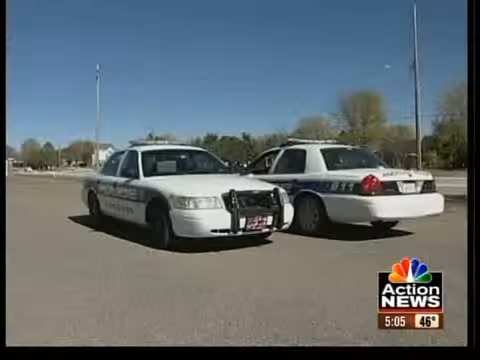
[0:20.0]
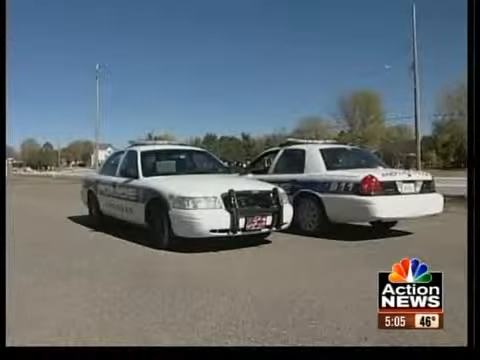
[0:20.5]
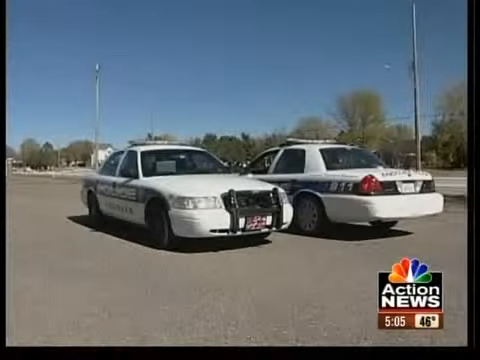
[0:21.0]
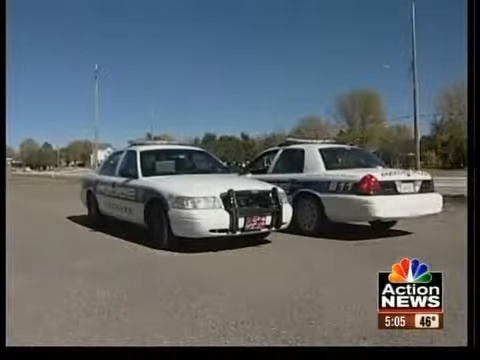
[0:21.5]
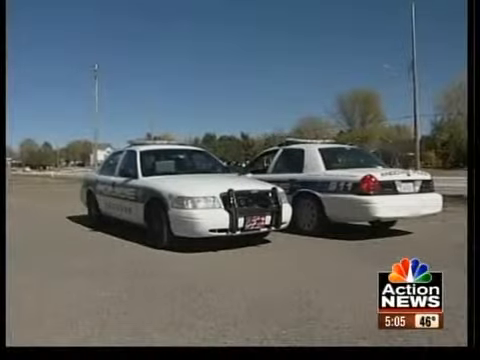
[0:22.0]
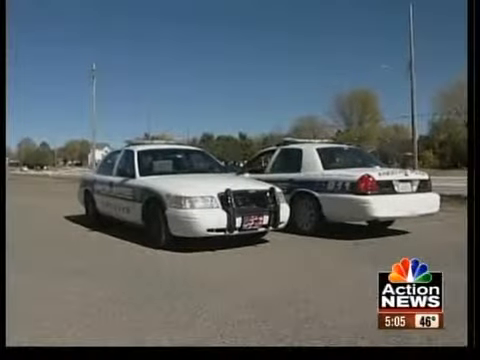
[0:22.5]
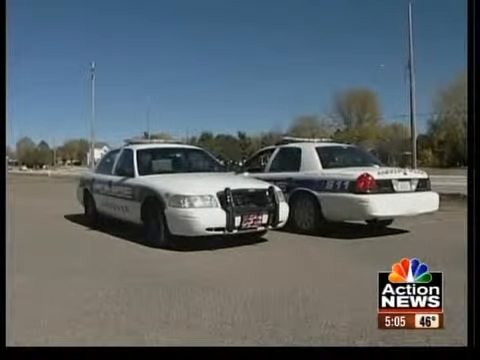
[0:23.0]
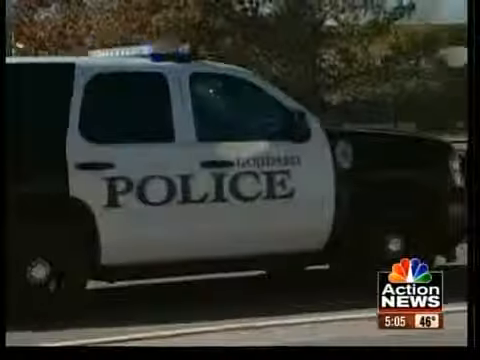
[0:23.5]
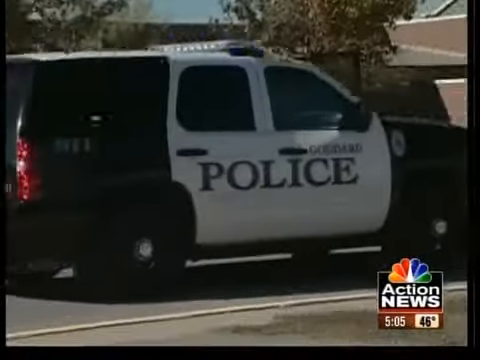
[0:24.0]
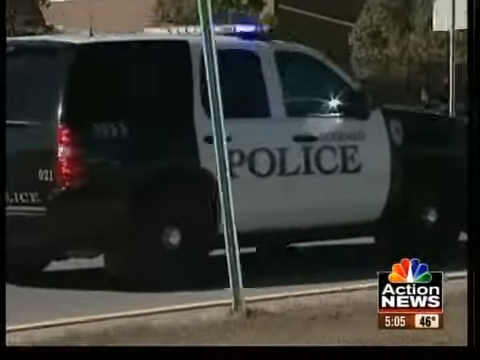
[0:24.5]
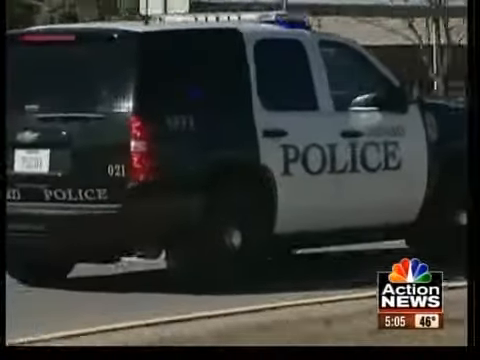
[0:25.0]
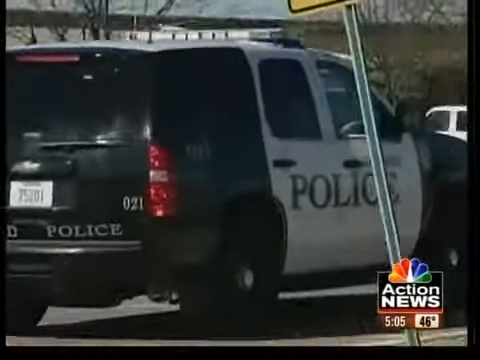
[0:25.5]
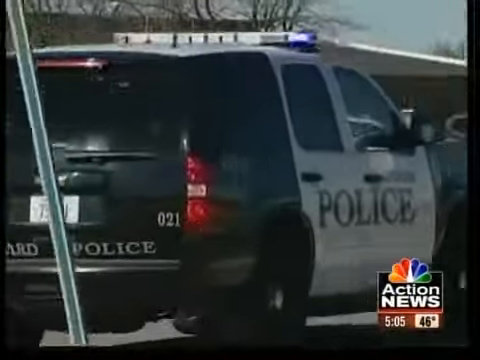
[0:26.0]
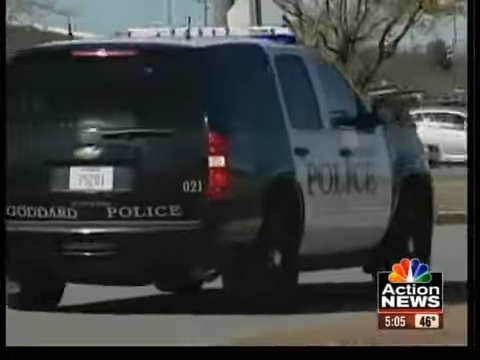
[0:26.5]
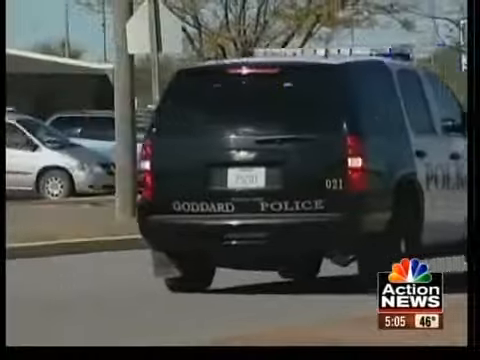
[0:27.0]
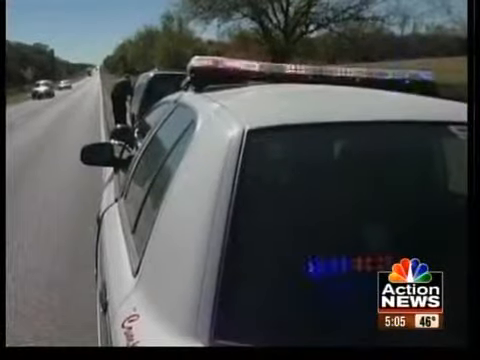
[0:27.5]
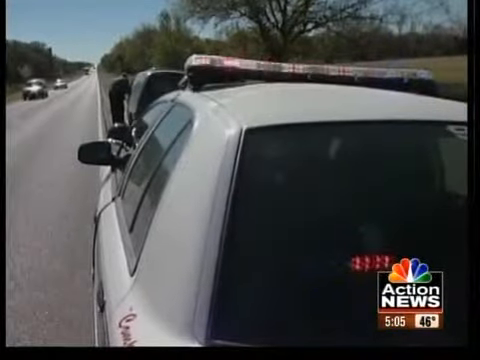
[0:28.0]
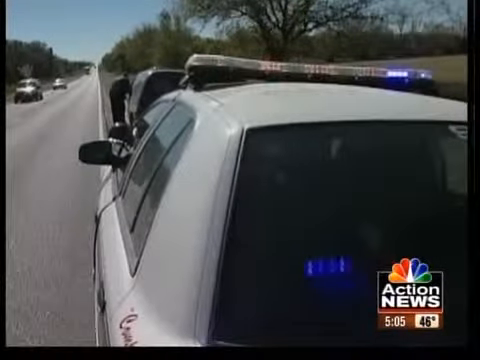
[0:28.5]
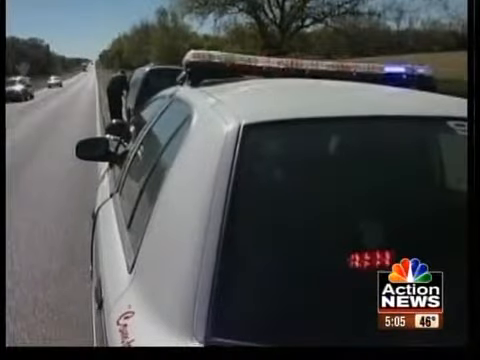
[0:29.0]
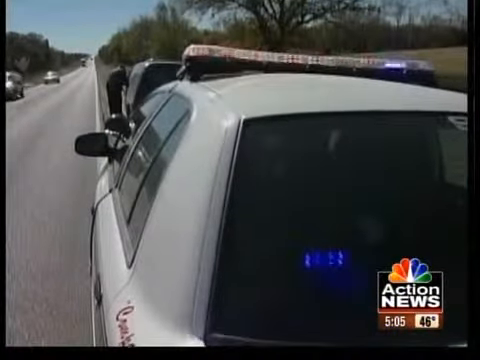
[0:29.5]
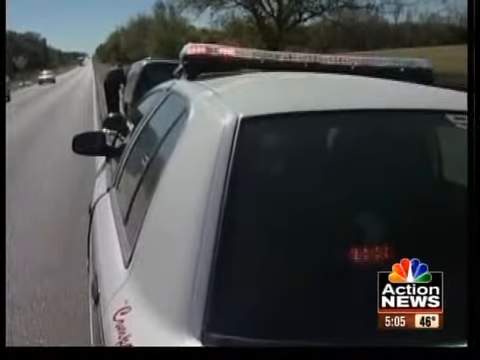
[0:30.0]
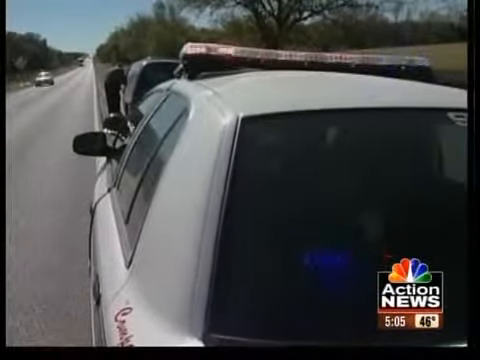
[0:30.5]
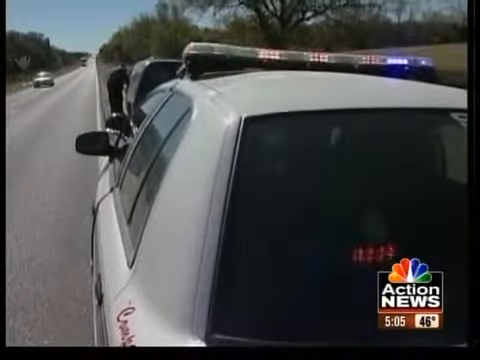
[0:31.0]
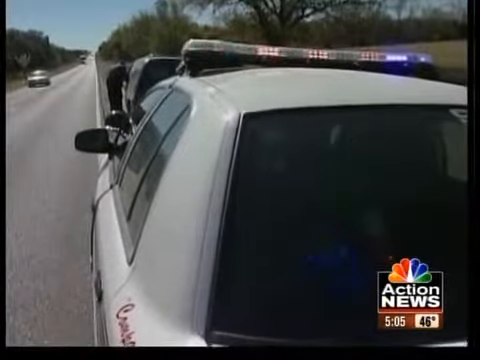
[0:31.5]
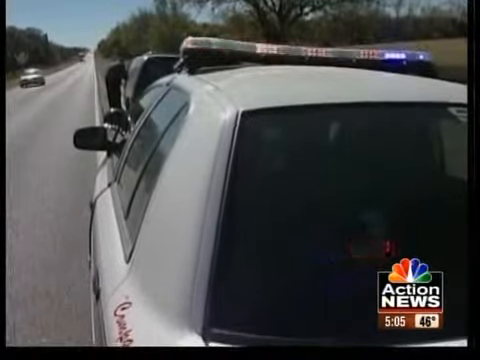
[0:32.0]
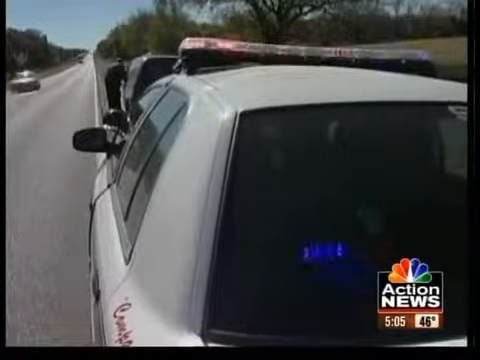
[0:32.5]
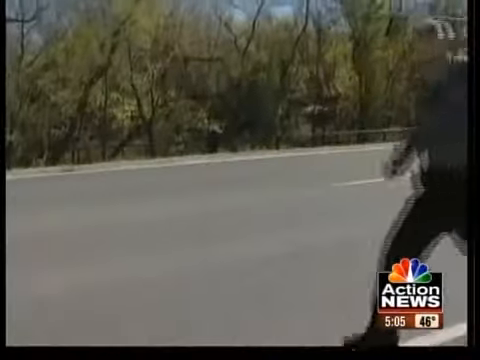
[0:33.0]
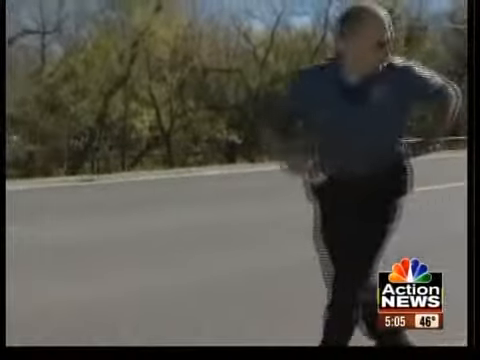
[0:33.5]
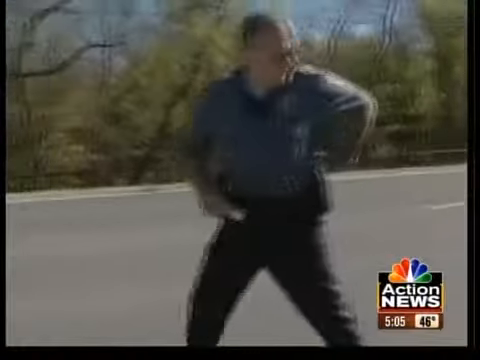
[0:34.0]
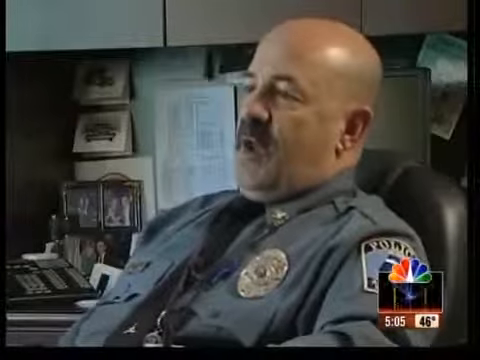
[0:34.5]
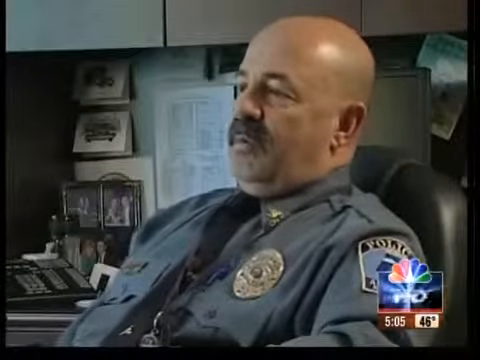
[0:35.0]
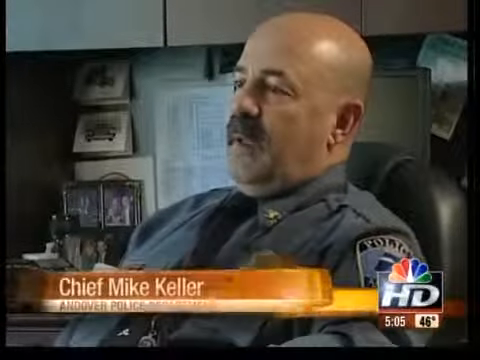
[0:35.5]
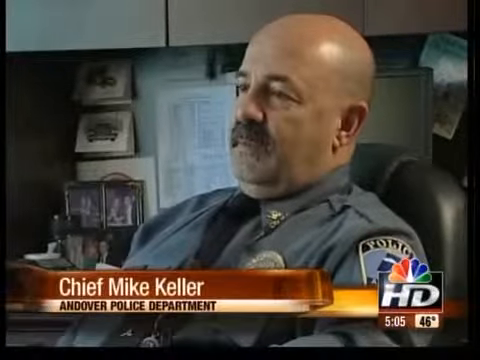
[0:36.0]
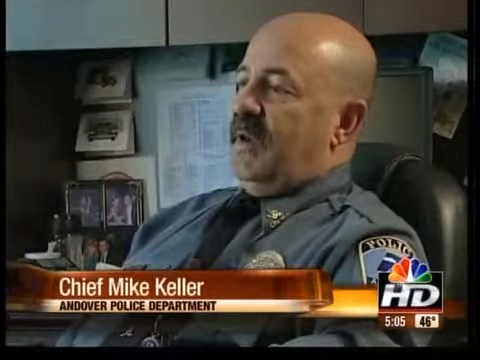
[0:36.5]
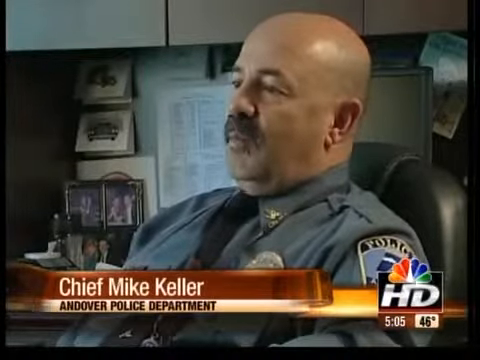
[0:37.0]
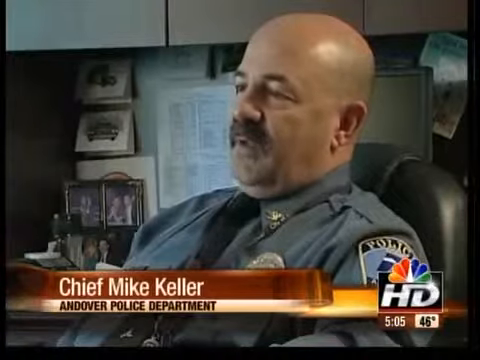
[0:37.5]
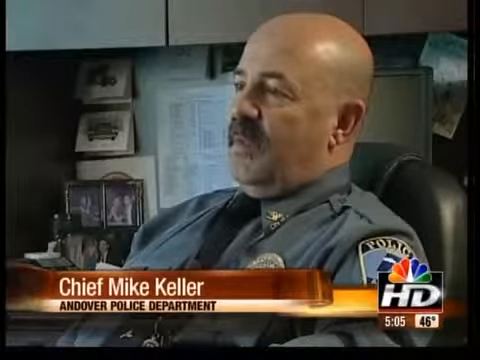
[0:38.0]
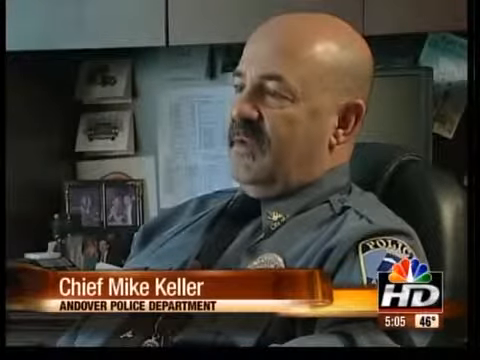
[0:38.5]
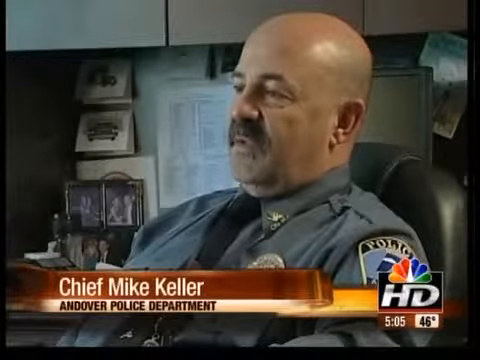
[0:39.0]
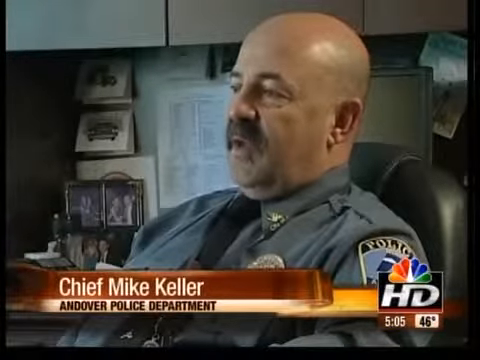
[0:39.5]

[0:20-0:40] Two police cars are next to each other, going forward in opposite directions, in the middle of a city. Portions of the city are visible, like a neighborhood, along with large street lights or electrical lines. Another shot shows a vehicle or SUV that says police; the vehicle is black, not white. It seems to be heading quickly in a direction of the city, and a portion of its license plate reads "5201". The video then cuts back to the police officer pulled over on the side of the highway. The police car's red and blue flashers are blinking. The officer looks back as he walks away from the vehicle he has pulled over. There is sweat at the top of his shirt. Multiple cards and paperwork are visible. A banner at the bottom of the screen shows the name Mike Keller and "Andover Police Department".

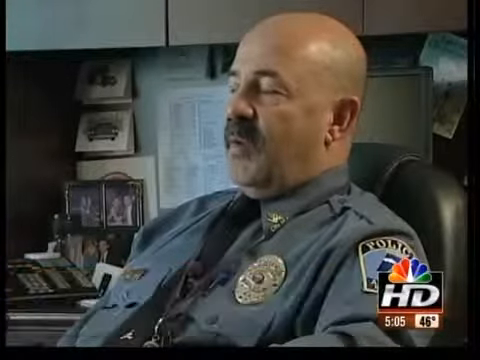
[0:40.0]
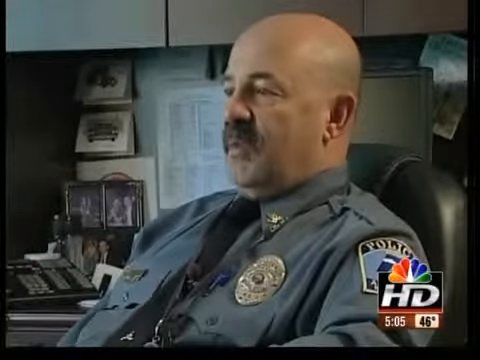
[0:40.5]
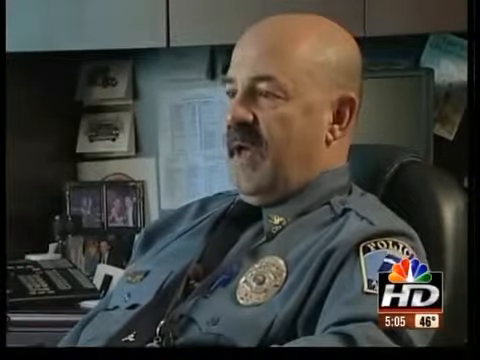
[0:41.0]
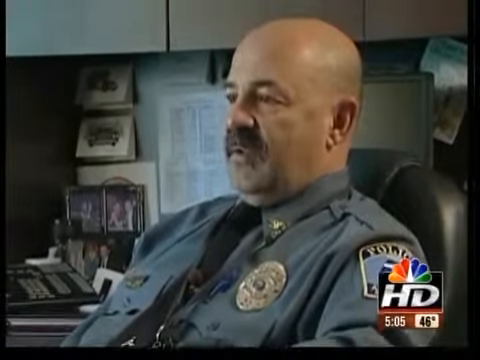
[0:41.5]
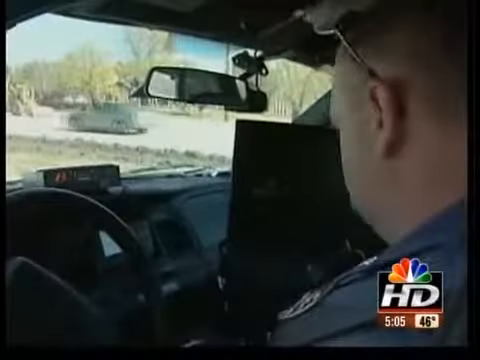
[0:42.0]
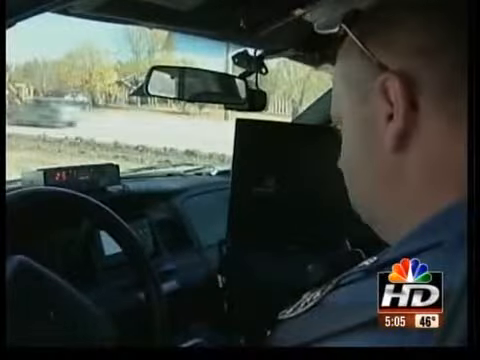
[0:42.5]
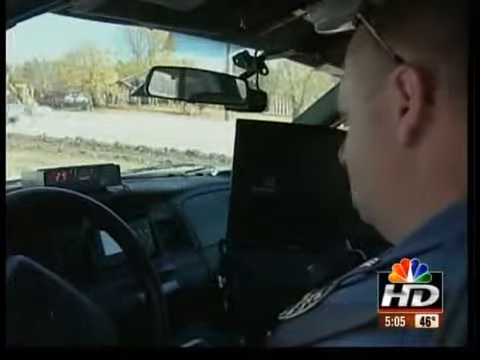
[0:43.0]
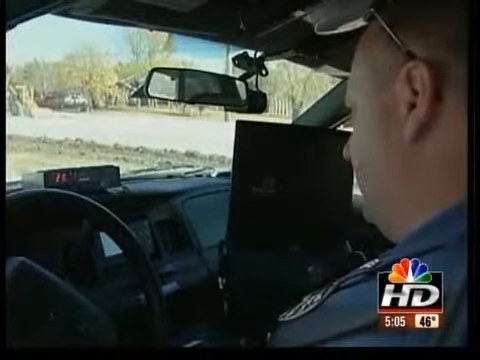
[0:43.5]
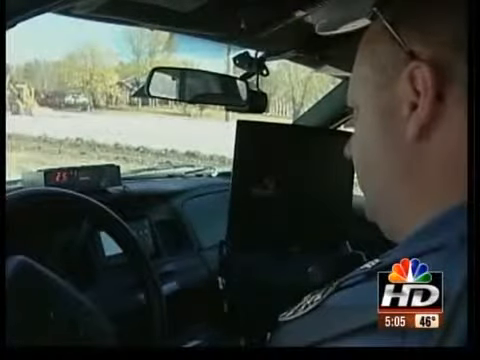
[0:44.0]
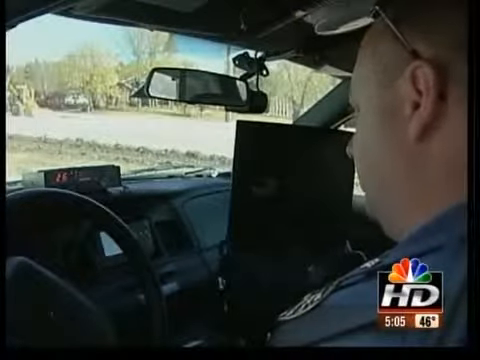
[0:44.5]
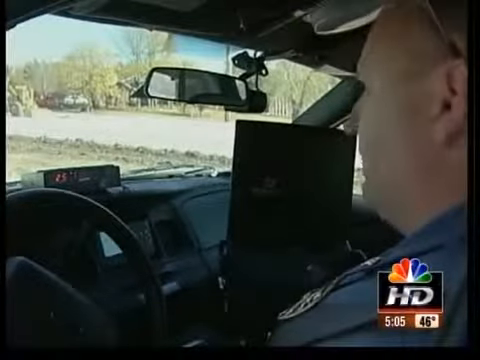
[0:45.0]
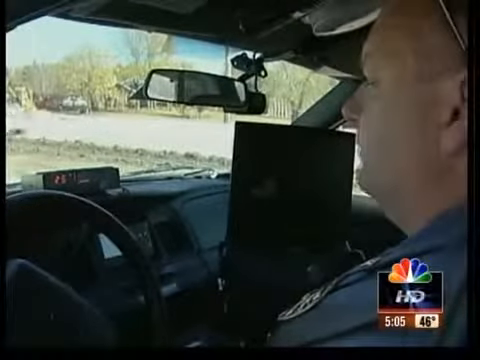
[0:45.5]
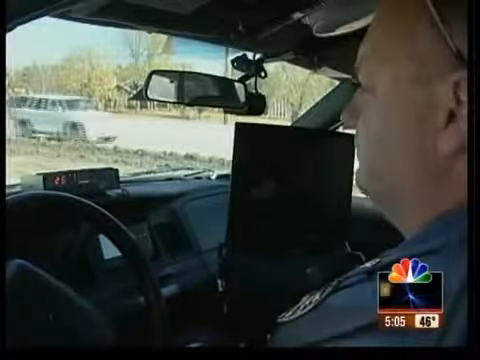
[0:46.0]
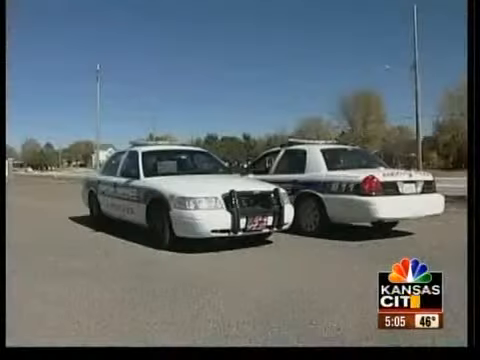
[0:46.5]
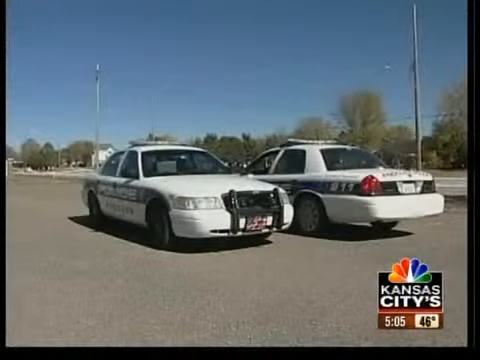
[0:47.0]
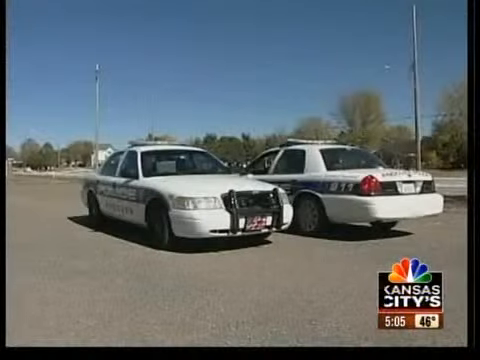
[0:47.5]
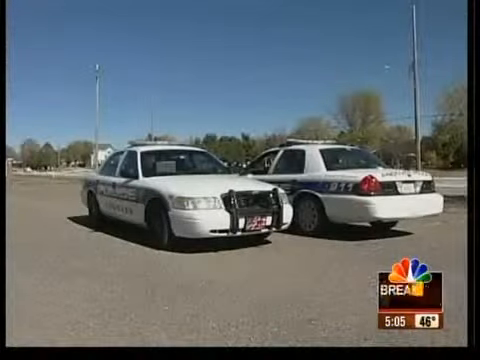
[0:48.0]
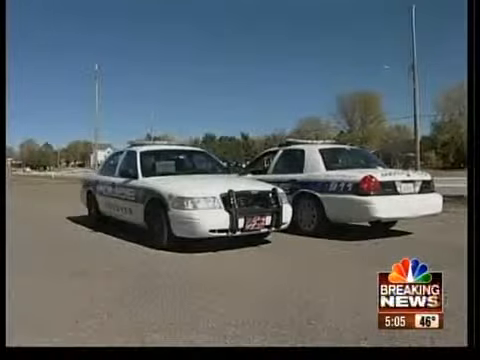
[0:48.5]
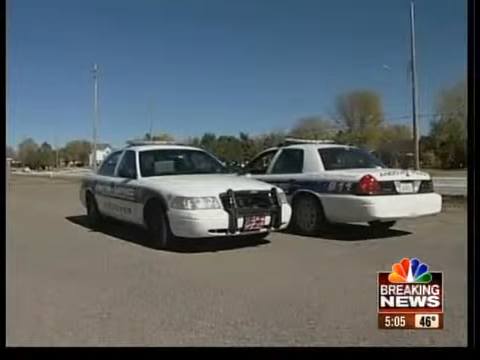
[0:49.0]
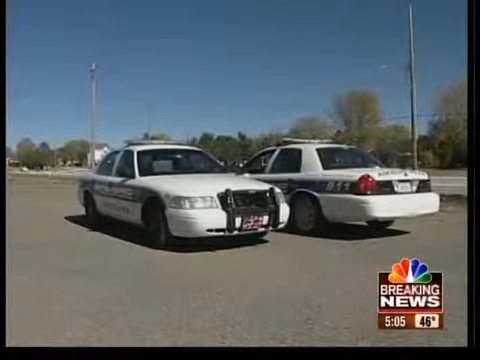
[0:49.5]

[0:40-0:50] Someone sits in a chair in uniform, a police blue shirt. There is an emblem on the paperwork. Inside the vehicle there are multiple electronics: what looks like a small laptop and a small radio-looking device, which all seem to be police electronics. Two police cars, both sedans, are outside, facing opposite ways but stopped, and the people inside the vehicles look like they are possibly having a discussion with each other. The setting is a city, evident from the city lighting.